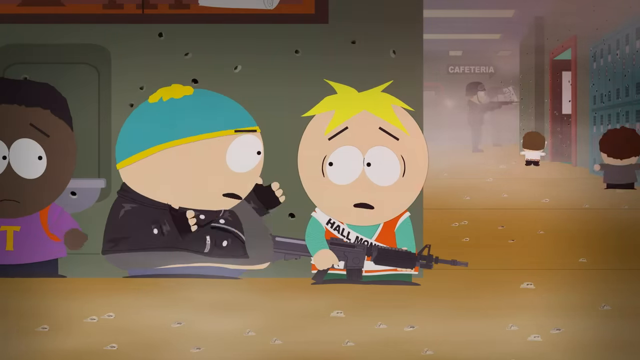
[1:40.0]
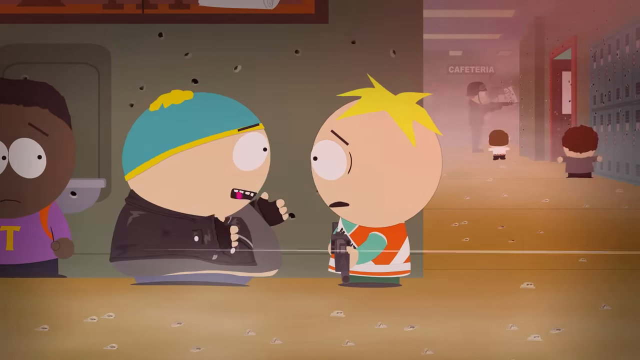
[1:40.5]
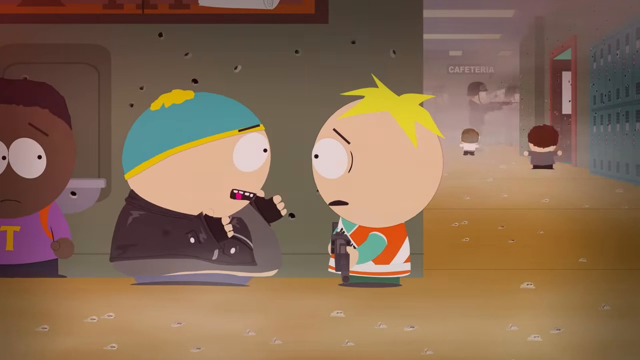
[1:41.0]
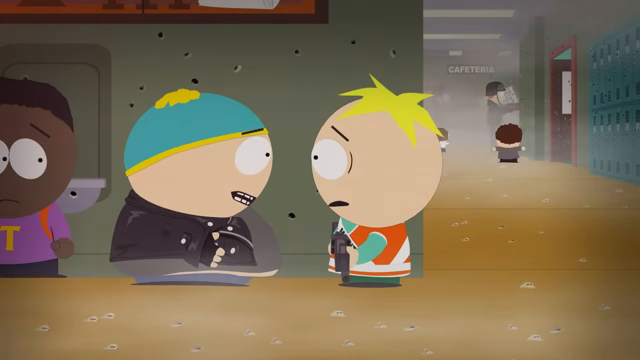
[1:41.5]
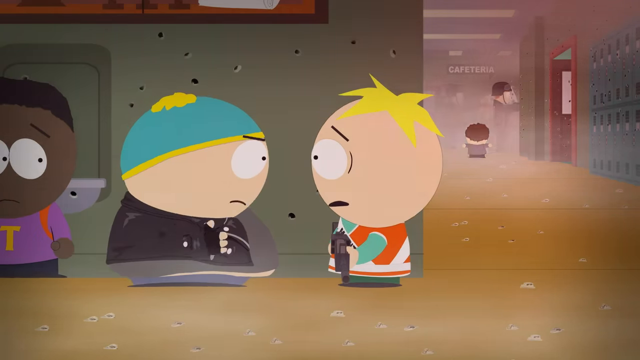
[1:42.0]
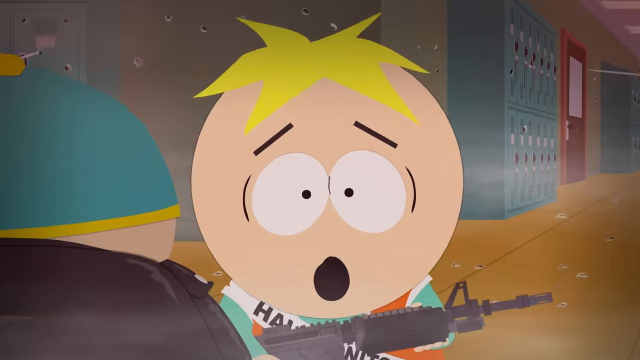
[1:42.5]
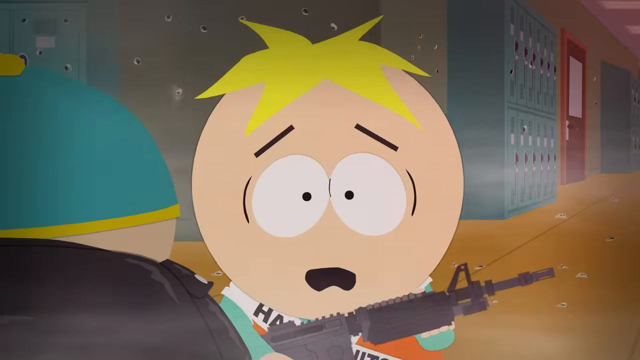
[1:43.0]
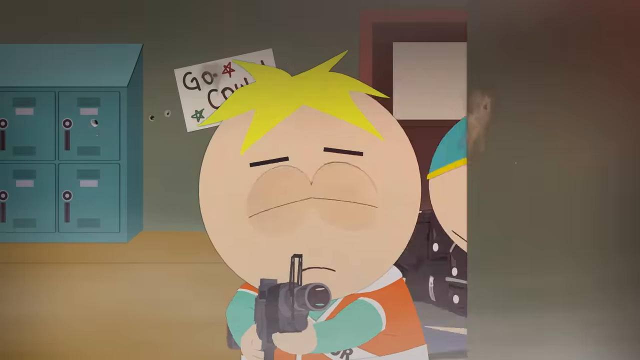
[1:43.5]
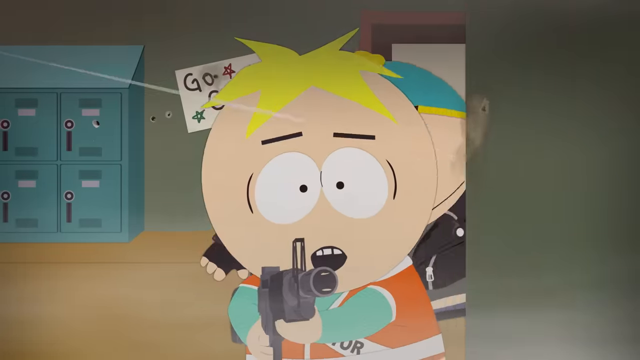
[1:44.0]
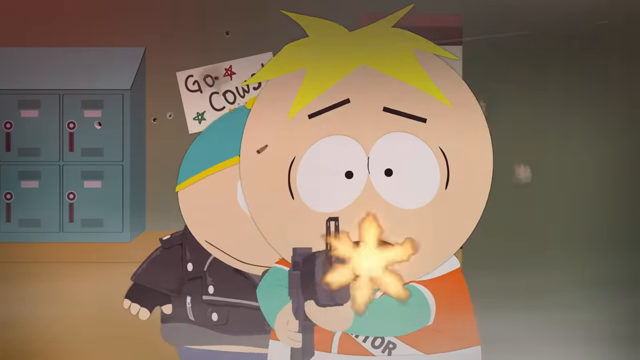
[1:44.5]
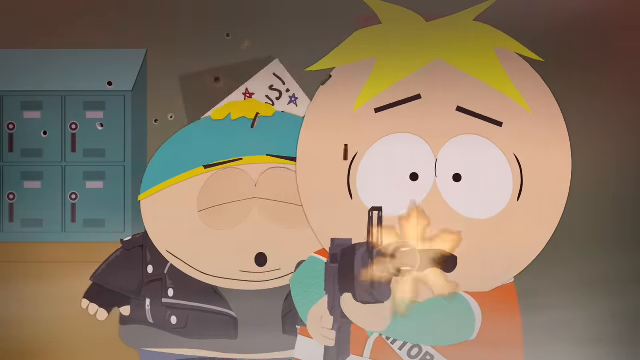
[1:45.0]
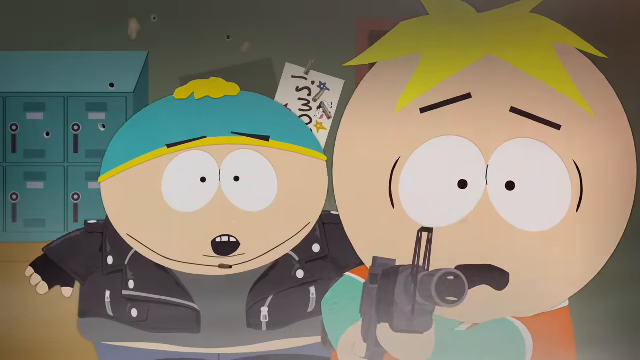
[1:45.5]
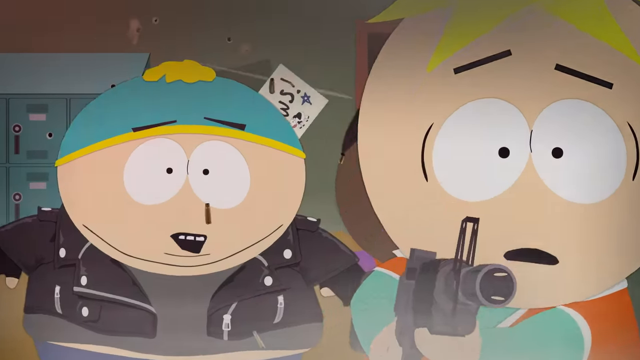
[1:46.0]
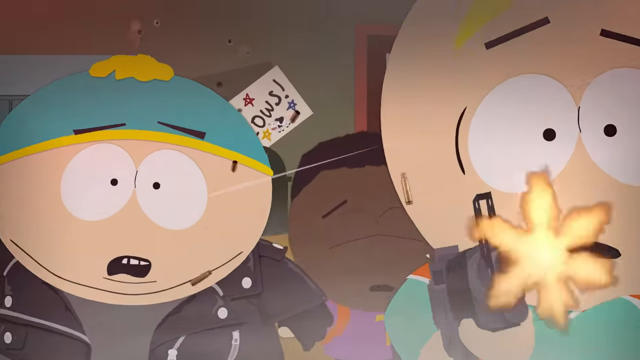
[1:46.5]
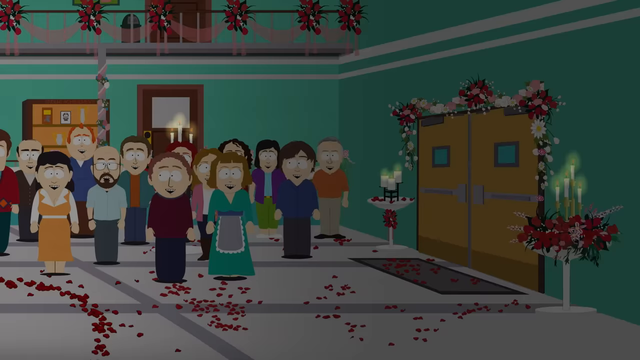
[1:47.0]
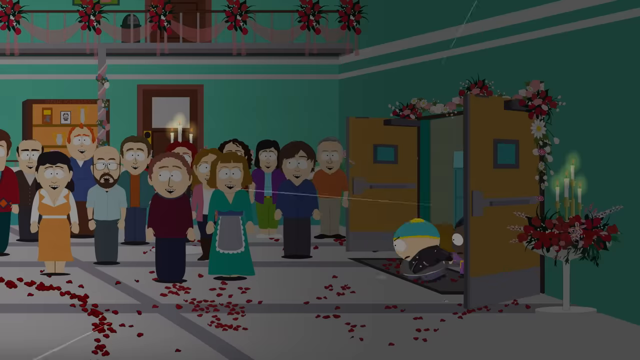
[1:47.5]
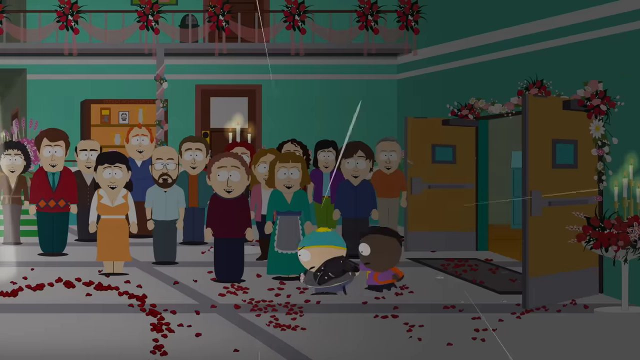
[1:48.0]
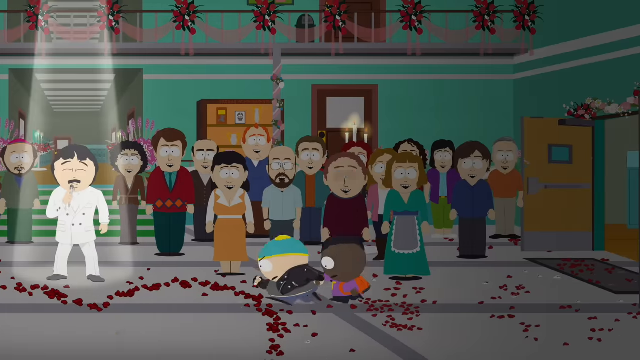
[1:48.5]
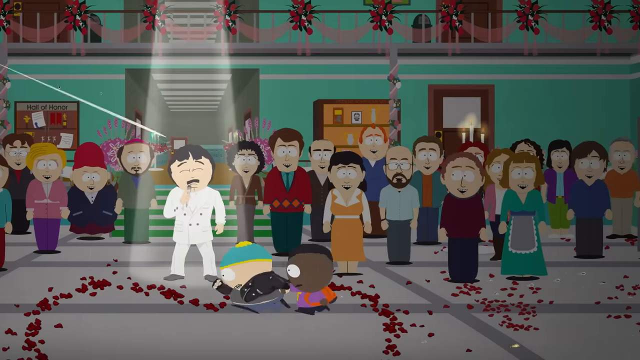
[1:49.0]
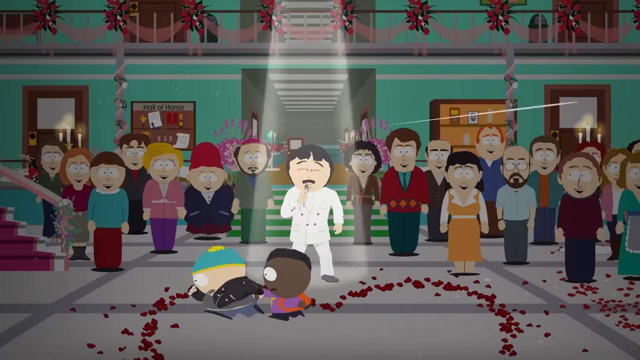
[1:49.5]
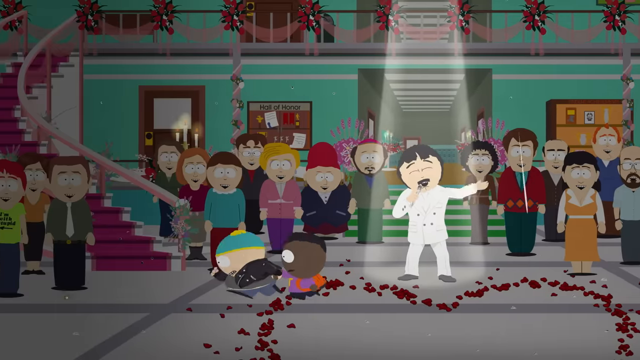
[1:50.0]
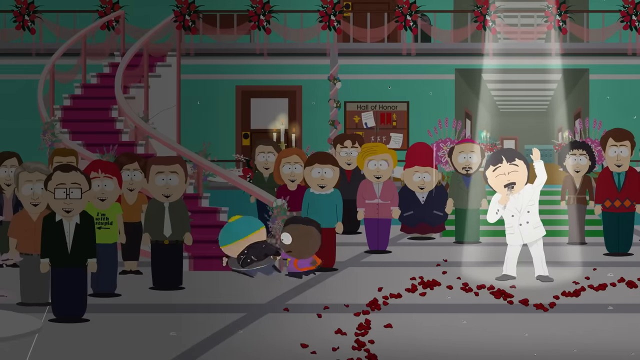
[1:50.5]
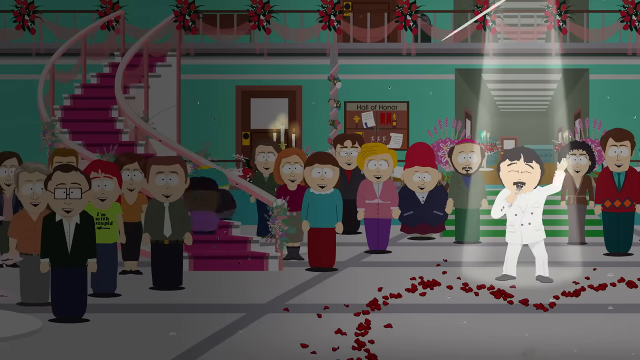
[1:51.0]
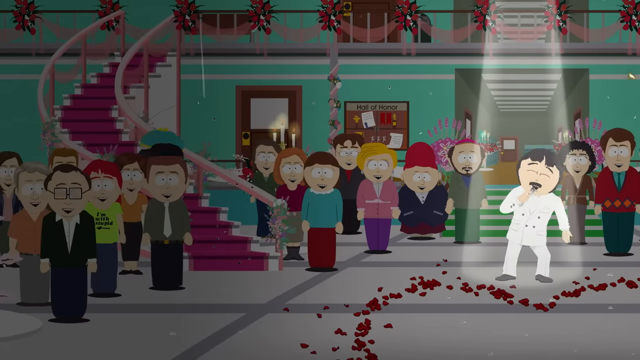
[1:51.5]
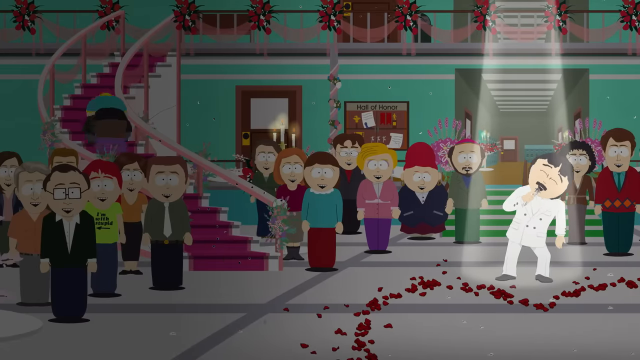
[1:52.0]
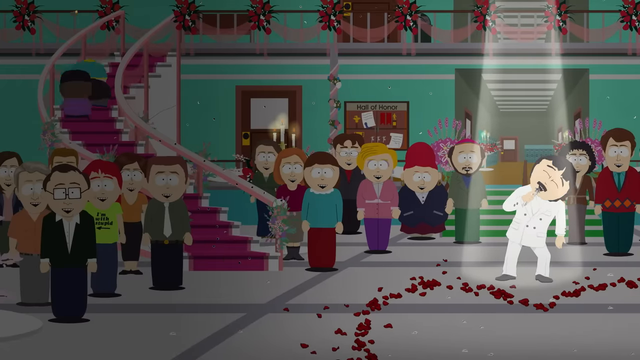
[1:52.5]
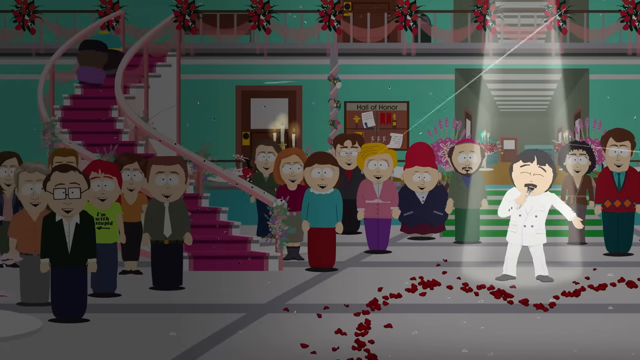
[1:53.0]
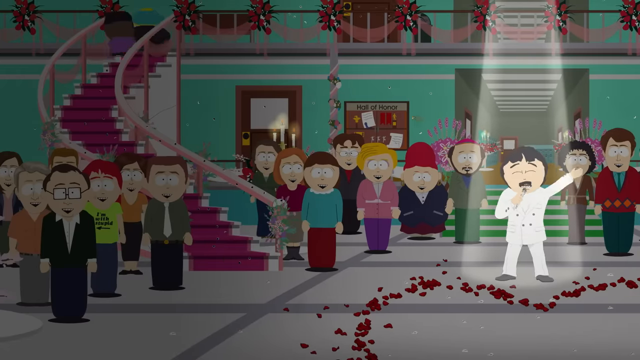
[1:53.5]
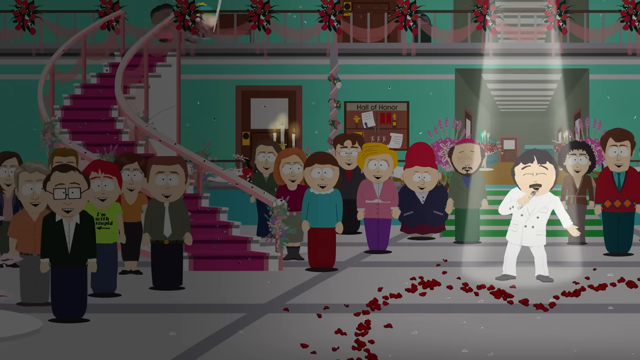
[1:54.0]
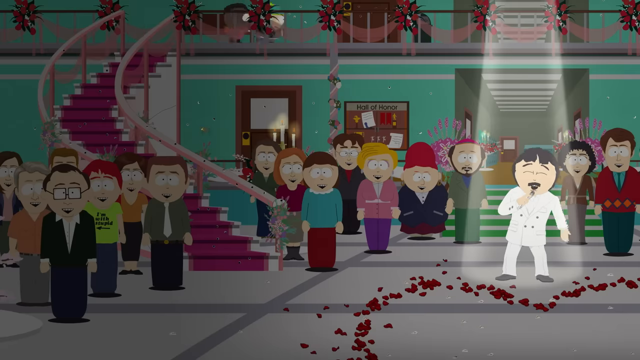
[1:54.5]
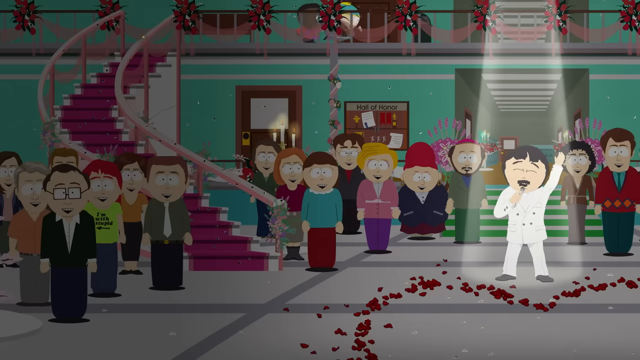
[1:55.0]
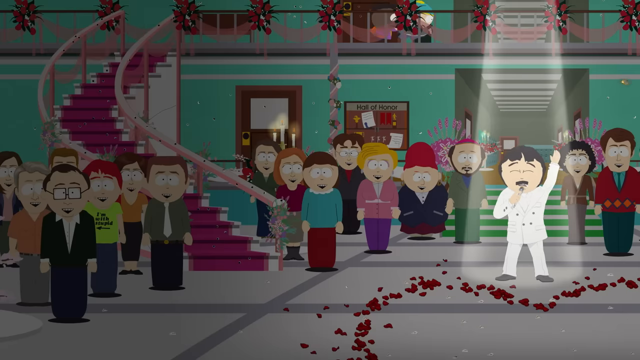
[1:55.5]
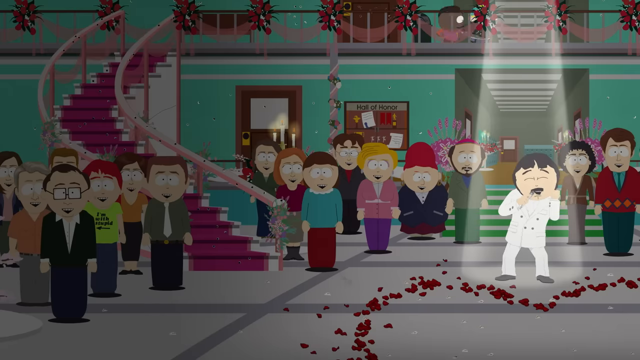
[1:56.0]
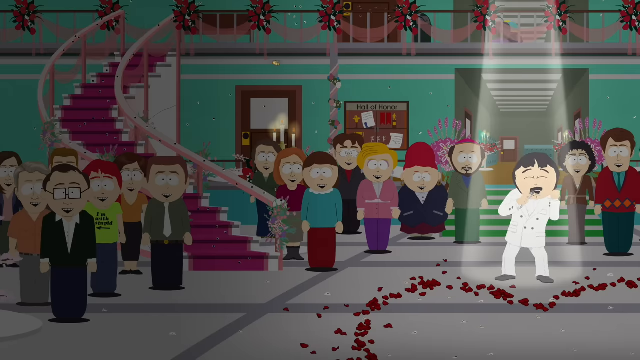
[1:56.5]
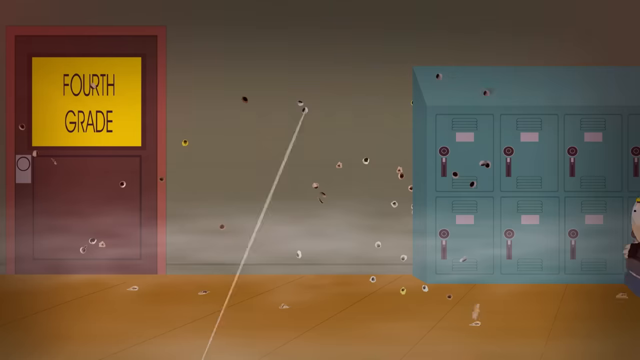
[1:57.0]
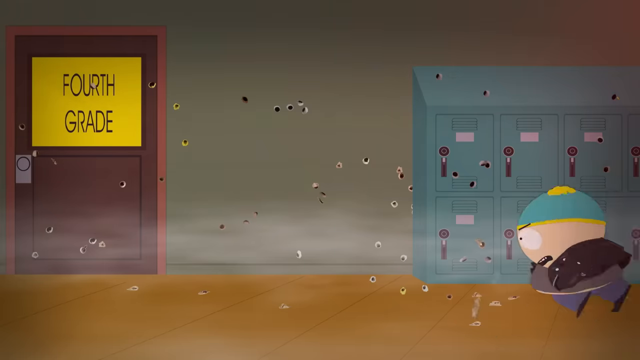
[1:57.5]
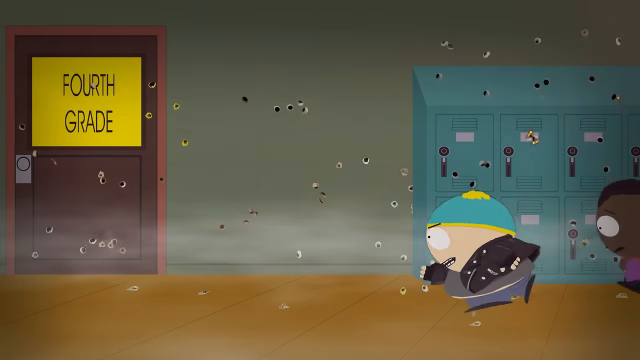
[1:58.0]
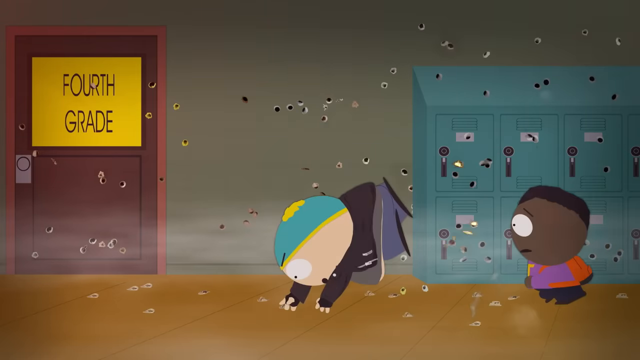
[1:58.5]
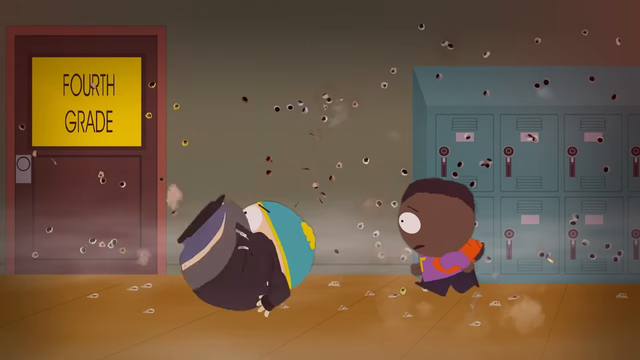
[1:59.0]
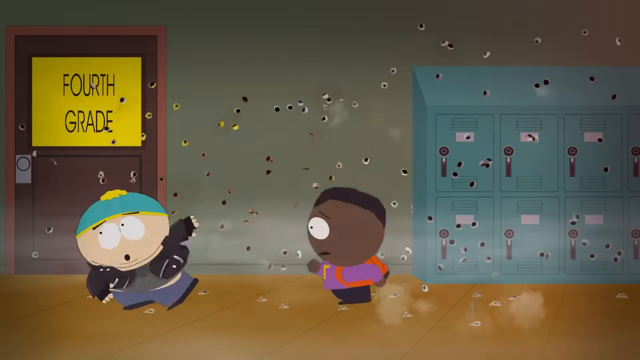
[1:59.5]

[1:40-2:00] Three characters are in the centre of the frame. On the left is the dark-skinned boy in the purple top; in the centre is the fat boy in the leather jacket with the teal and yellow hat, gesticulating towards the boy on the right. That boy wears a white sash that says "Hall Monitor" in black font and appears to be wearing a teal or mint top with green trousers, black shoes, and an orange vest or waistcoat of some sort. He is mostly bald but has a little patch of blonde hair on top of his head, and he holds a machine gun. Various officers are at the back on the right of the image. Earlier in the shot, the boys hide around the corner on the left-hand side, and on the right is the corridor, with a sign at the end that says "cafeteria" and a number of other little children walking towards the police officers in the background, who wear black helmets and black outfits. The little boy with the blonde hair starts shooting towards the door, and the boys run into the hall, where all the adults and teachers seem to be, watching a man sing. The person singing wears a white and black outfit, and none of the adults appear to be aware that a shooting is going on.